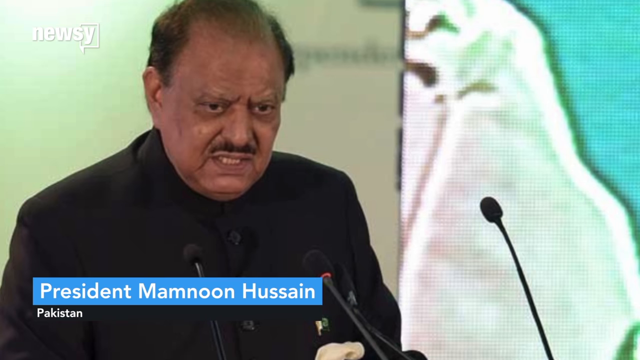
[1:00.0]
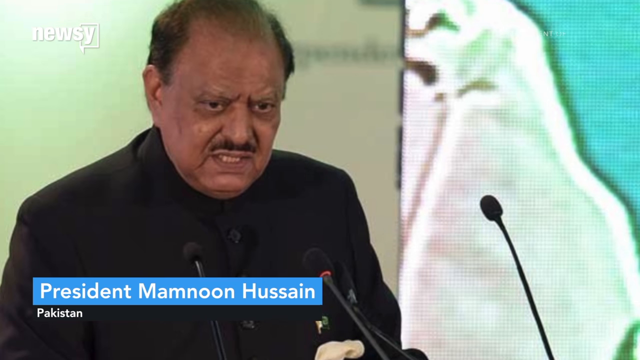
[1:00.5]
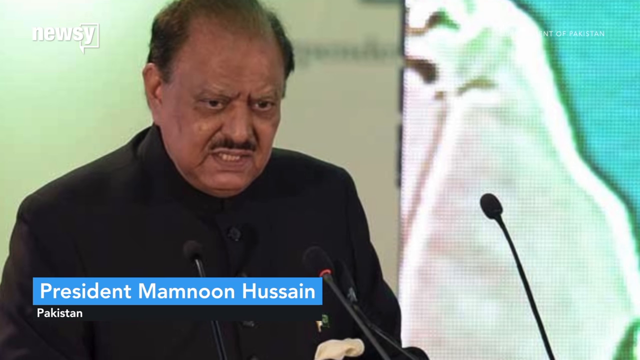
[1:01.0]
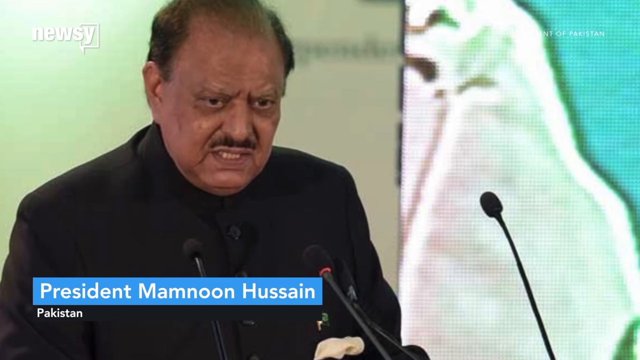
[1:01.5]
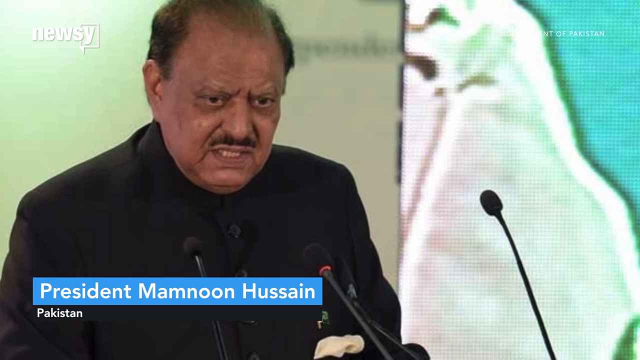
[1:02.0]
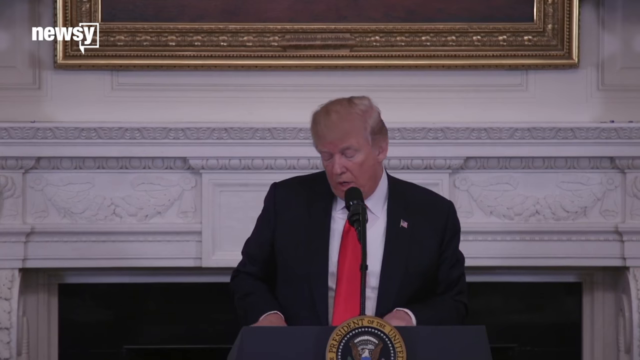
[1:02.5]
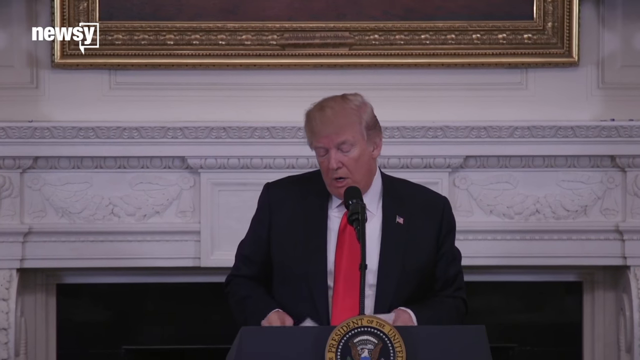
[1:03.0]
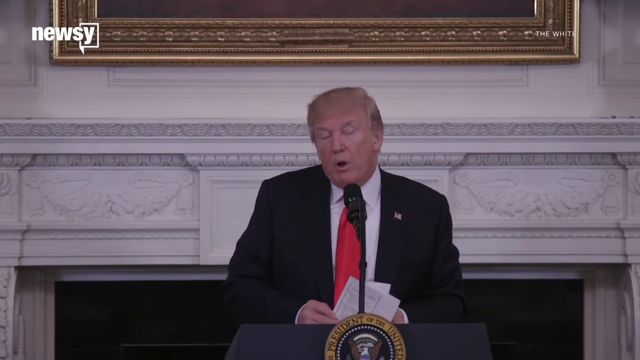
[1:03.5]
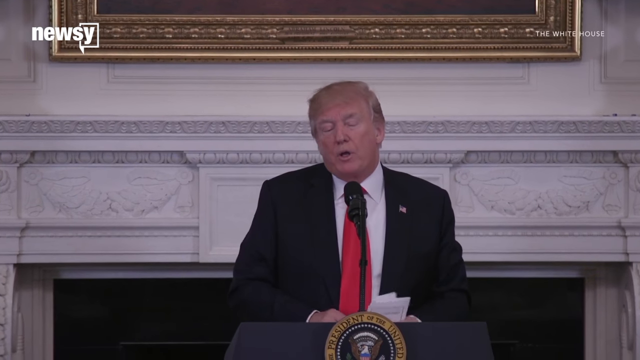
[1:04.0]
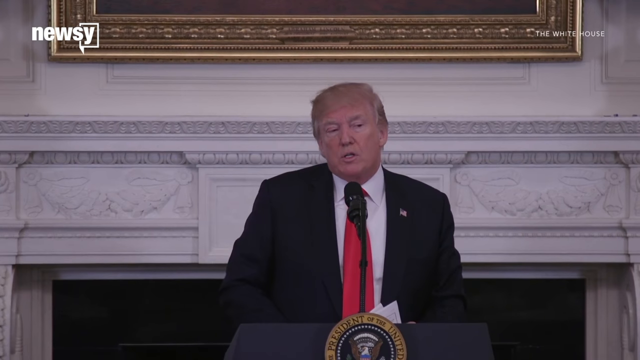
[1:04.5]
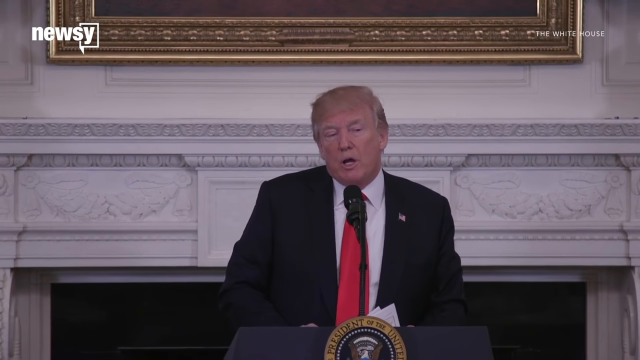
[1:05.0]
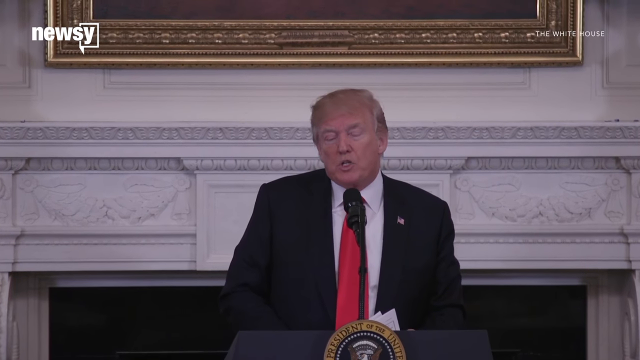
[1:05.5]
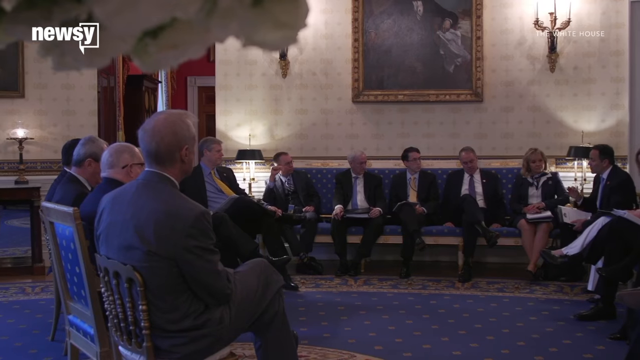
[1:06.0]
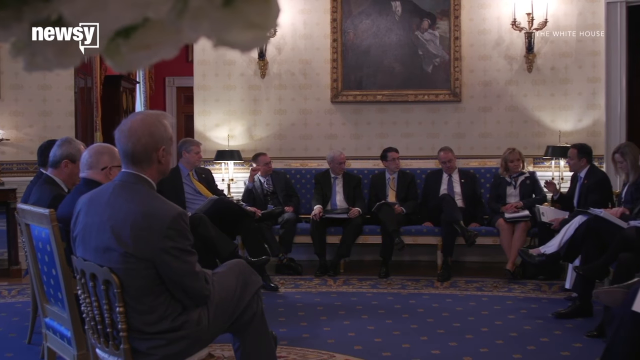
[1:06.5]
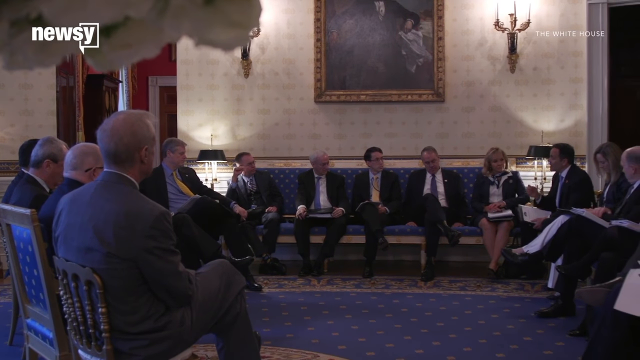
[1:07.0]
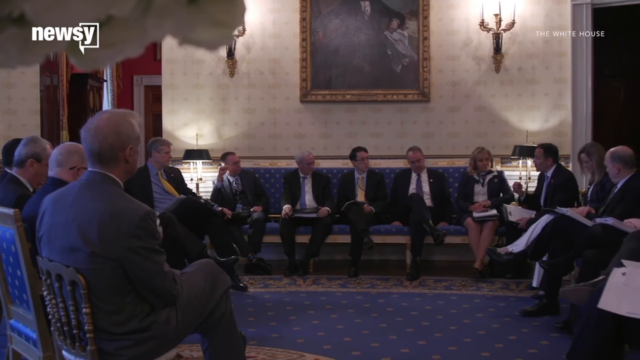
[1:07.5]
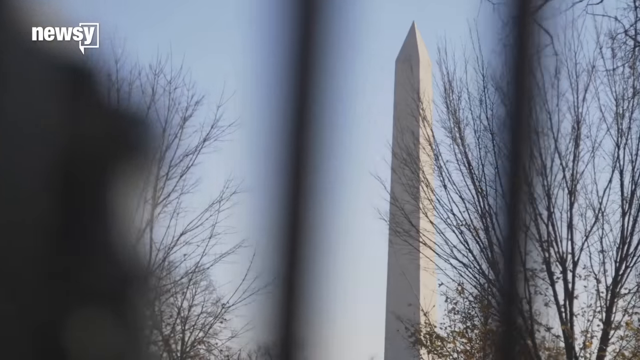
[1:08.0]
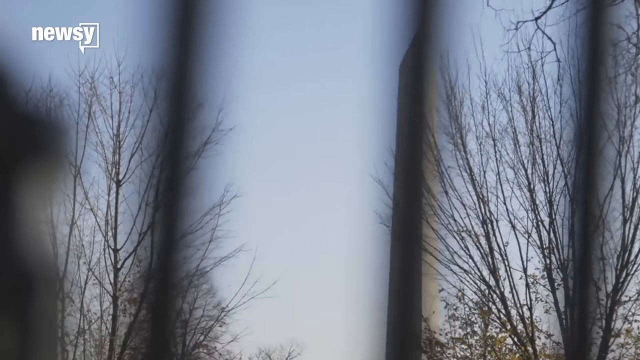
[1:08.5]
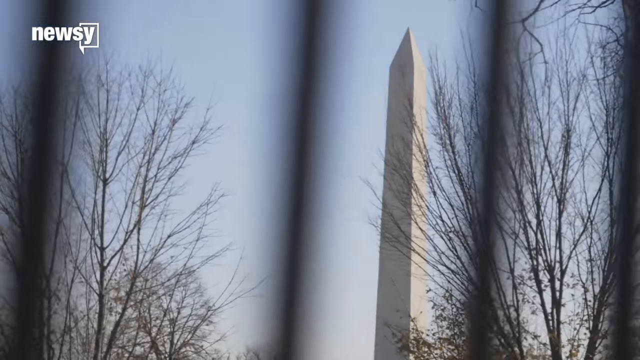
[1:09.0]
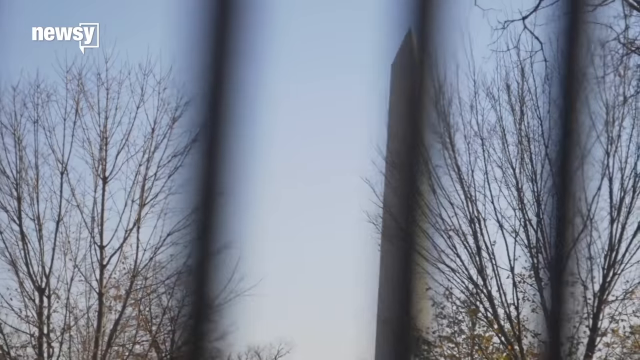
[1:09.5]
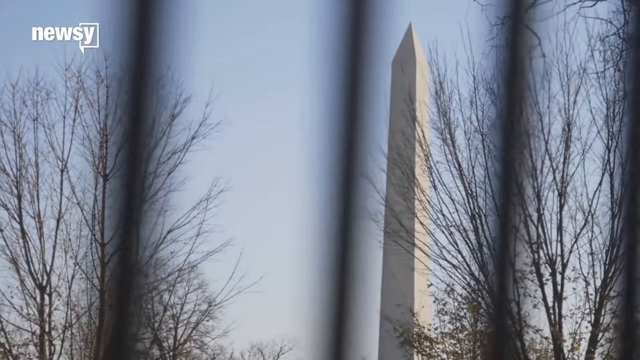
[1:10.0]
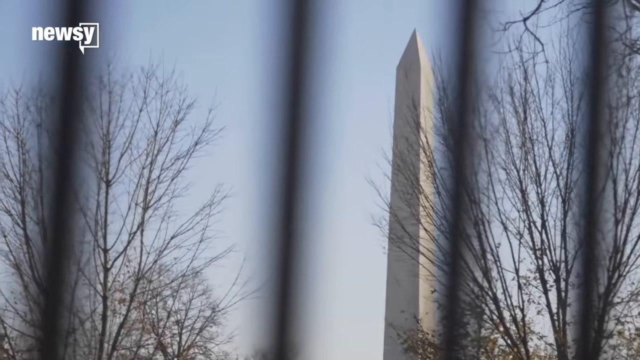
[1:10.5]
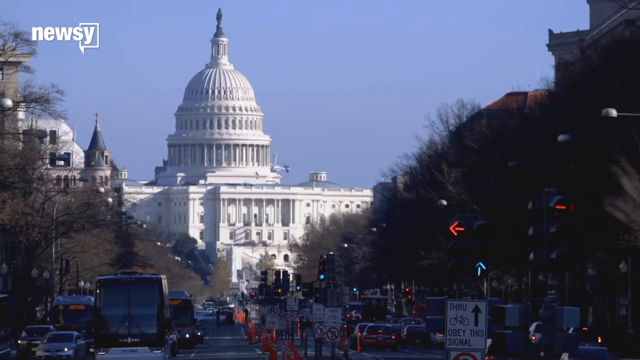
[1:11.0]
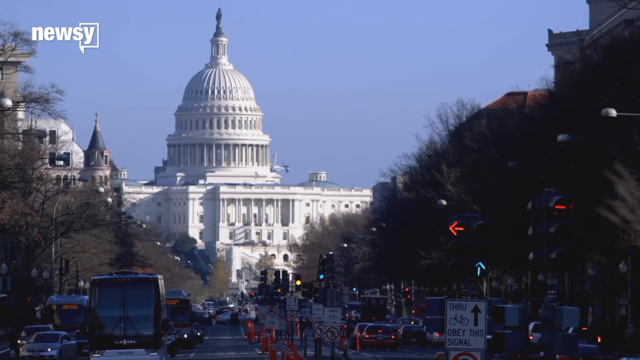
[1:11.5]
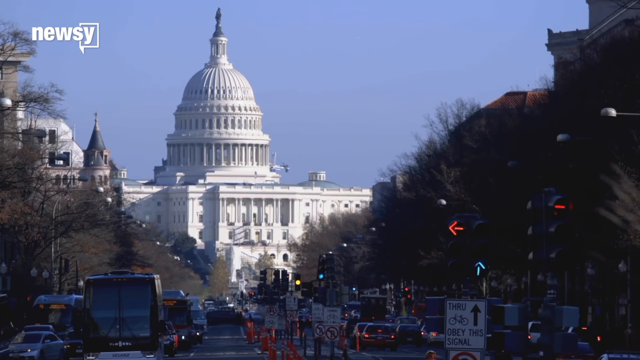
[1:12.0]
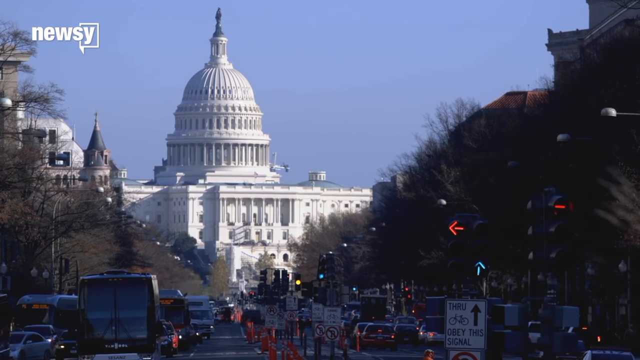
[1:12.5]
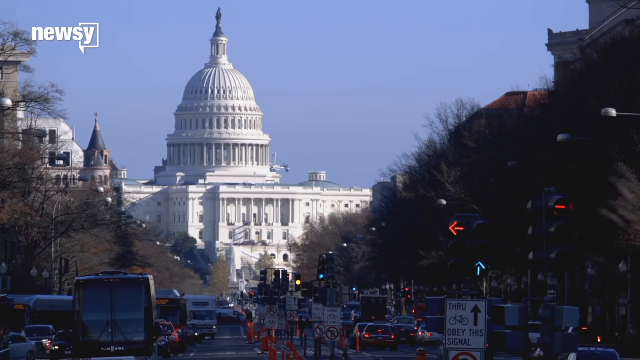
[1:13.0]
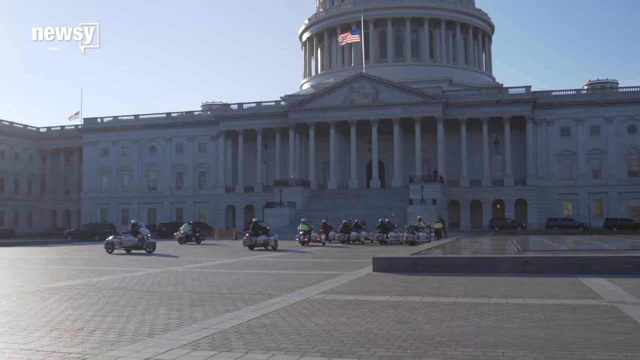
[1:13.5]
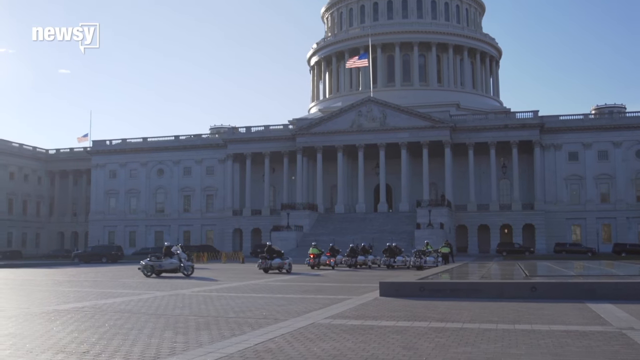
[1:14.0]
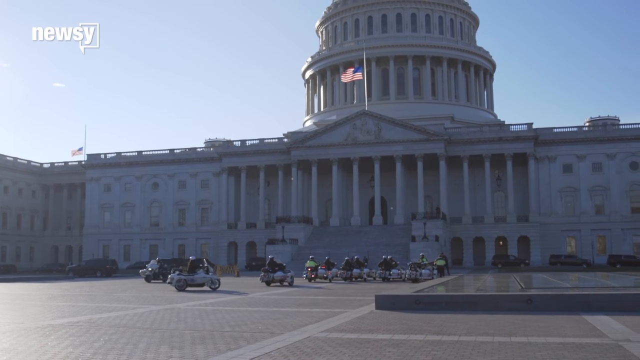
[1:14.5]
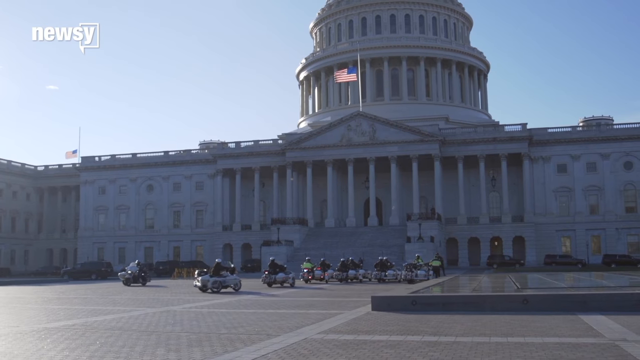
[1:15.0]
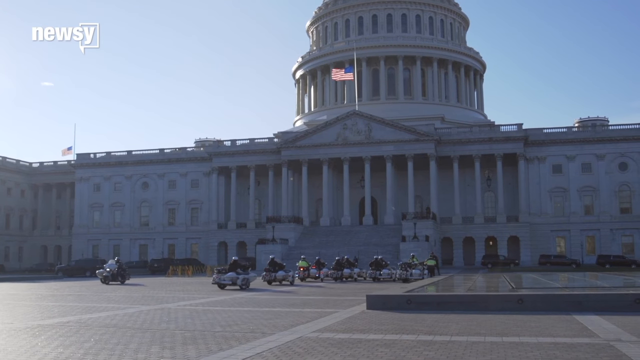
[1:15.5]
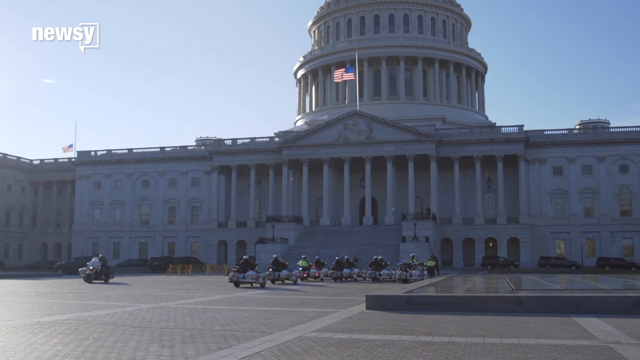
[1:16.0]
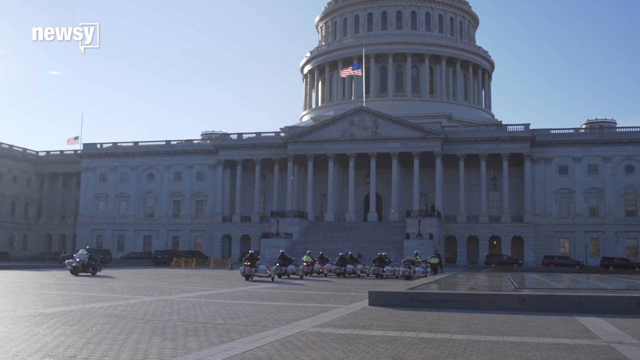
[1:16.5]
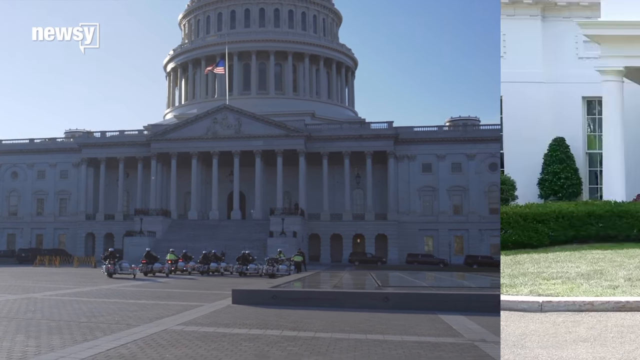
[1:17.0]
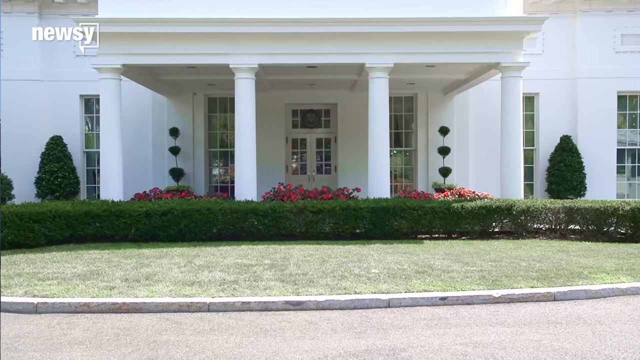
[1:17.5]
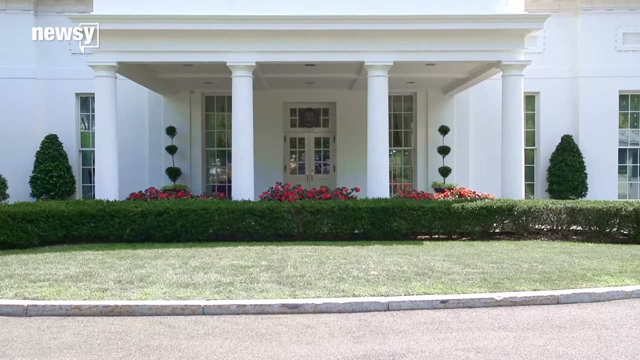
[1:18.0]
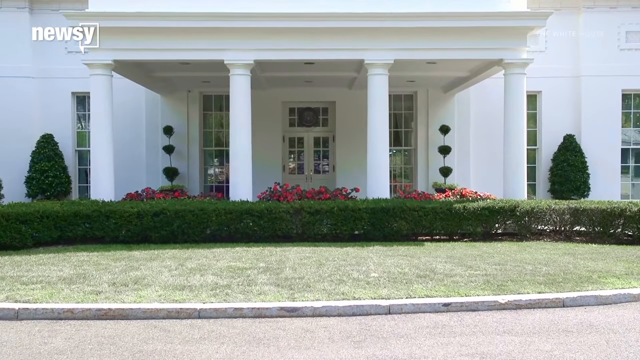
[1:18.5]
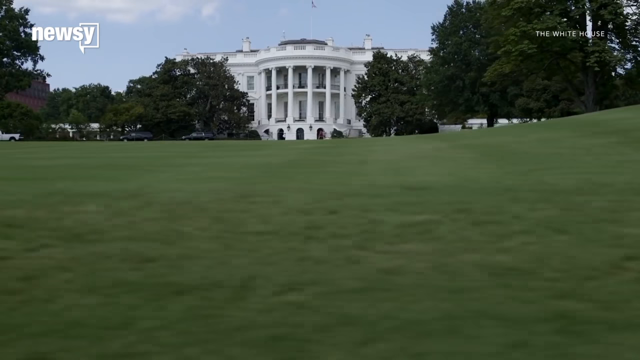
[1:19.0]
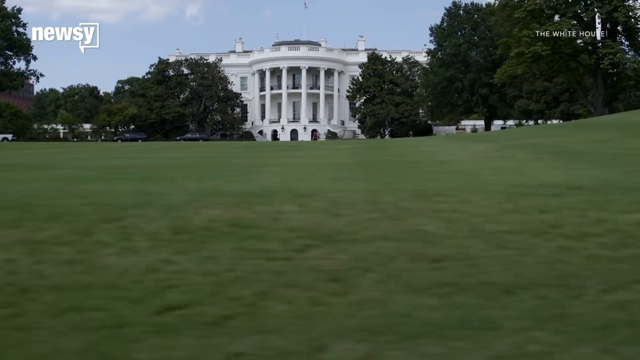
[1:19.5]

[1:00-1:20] A man stands in front of a podium, with a microphone off in the lower right-hand corner and a title underneath, kind of like a caption. He looks like he is maybe part Hispanic, with black hair and a small black mustache, and wears what looks like a black suit coat and a black shirt. The text reads "President Mamnoon Hossain." Next comes video of President Trump standing at a podium, then people sitting around in a building, spread out but in a circle. Some of the Washington monuments appear, then the White House, possibly its back, and then clearly the front of the White House with the grassy yard in front, as the view goes by that section.